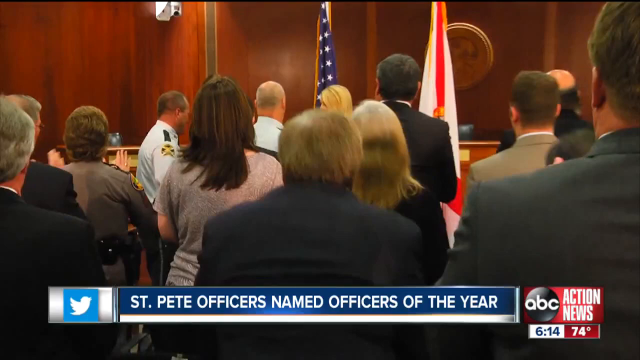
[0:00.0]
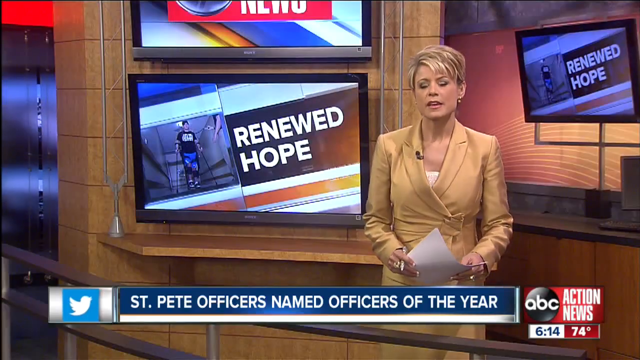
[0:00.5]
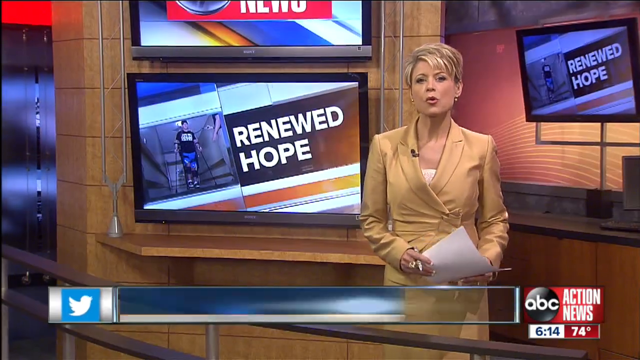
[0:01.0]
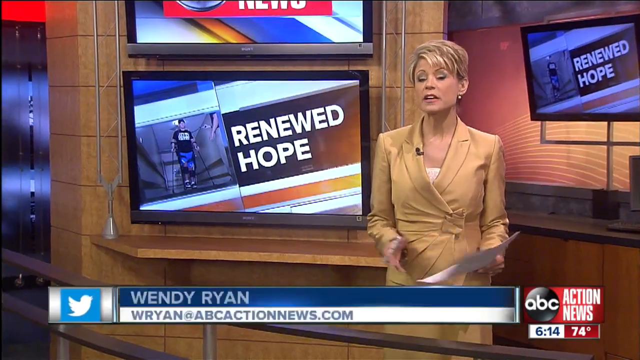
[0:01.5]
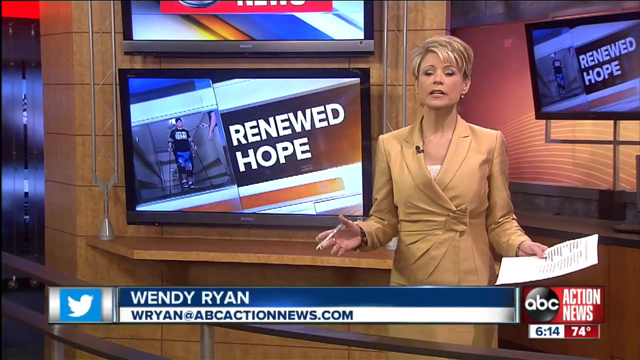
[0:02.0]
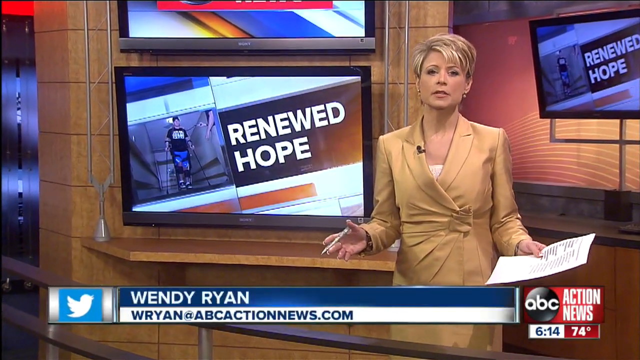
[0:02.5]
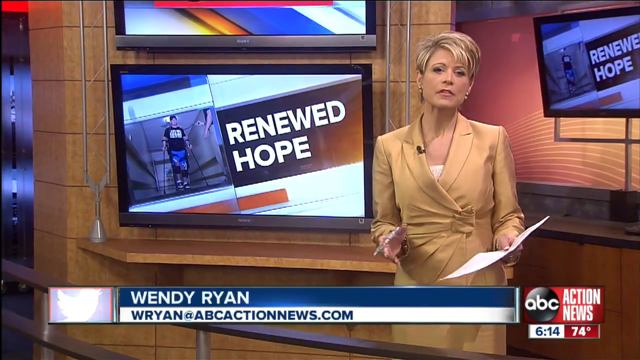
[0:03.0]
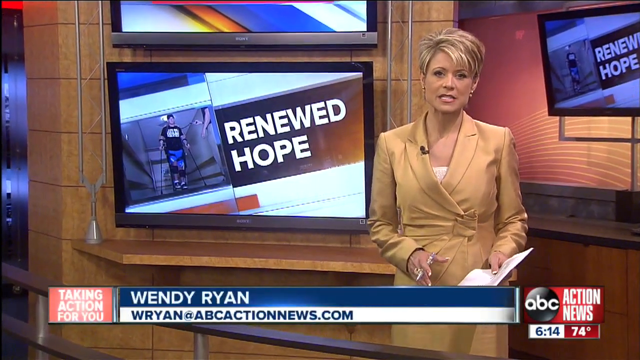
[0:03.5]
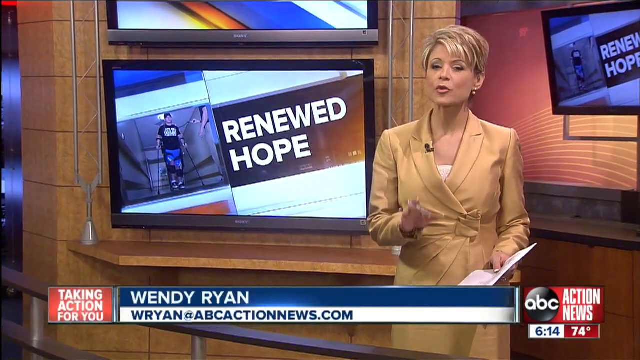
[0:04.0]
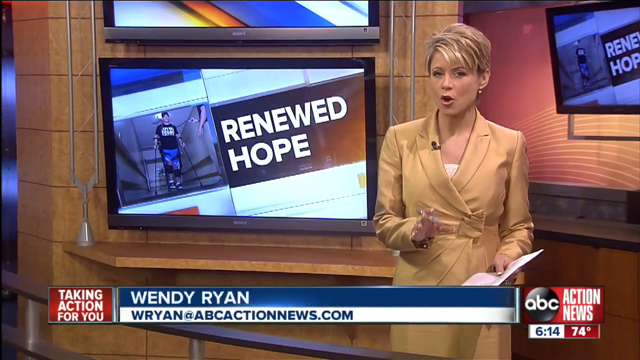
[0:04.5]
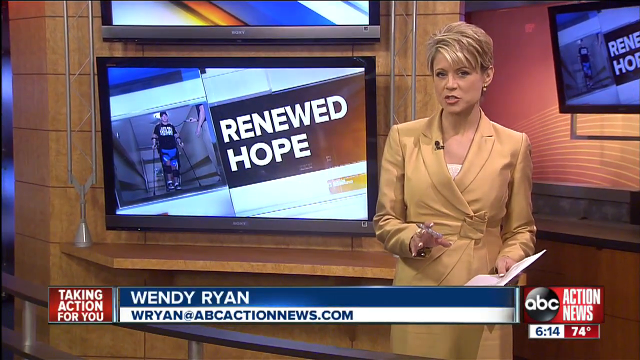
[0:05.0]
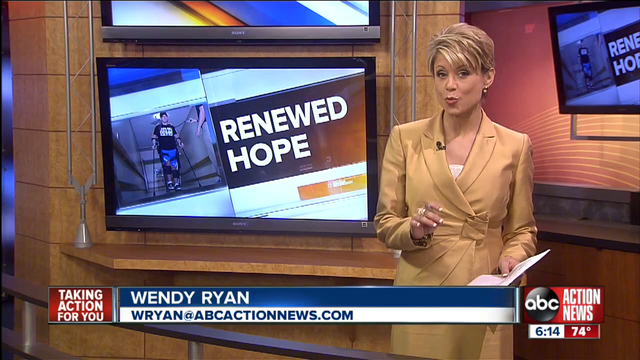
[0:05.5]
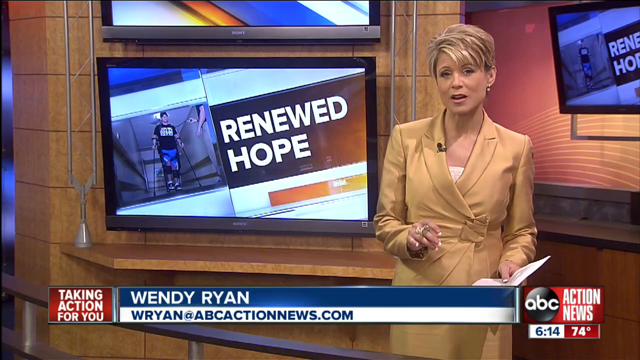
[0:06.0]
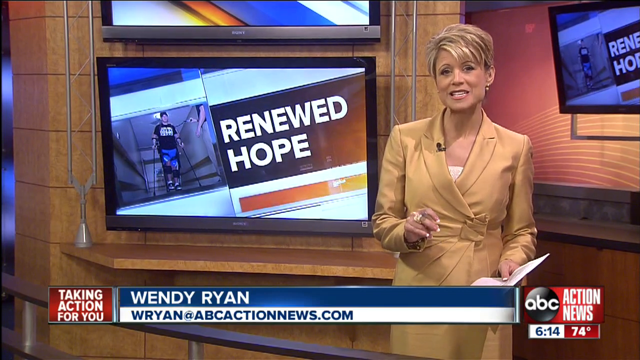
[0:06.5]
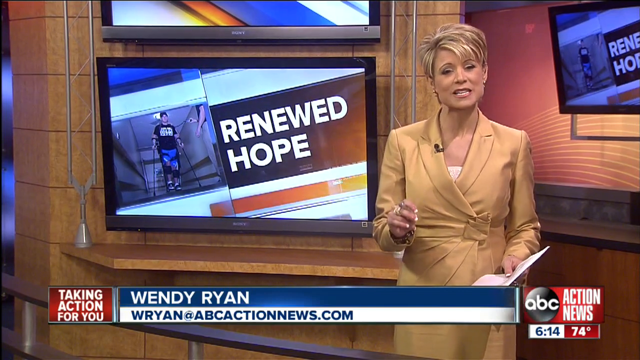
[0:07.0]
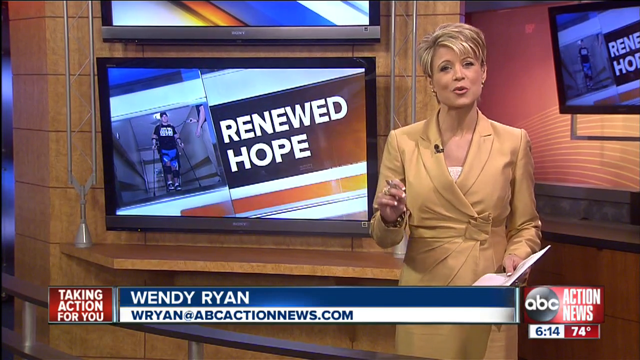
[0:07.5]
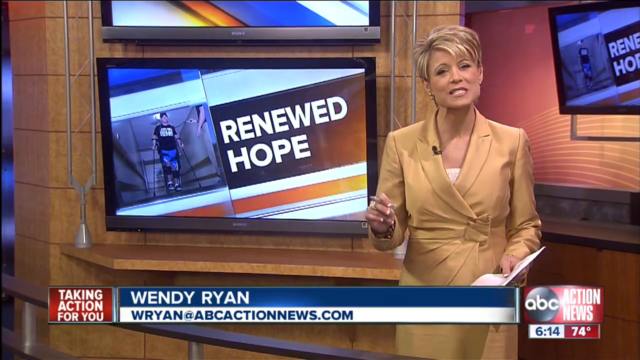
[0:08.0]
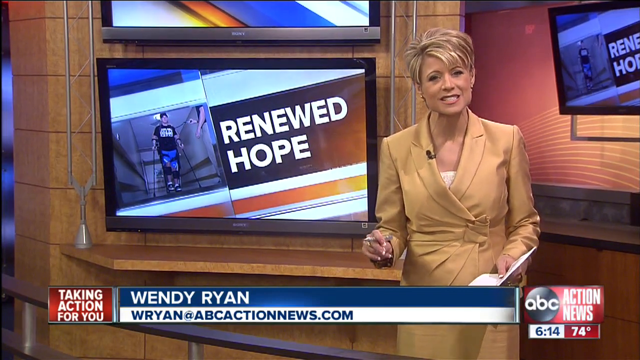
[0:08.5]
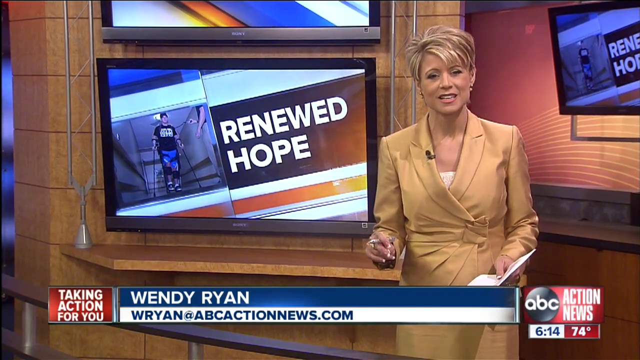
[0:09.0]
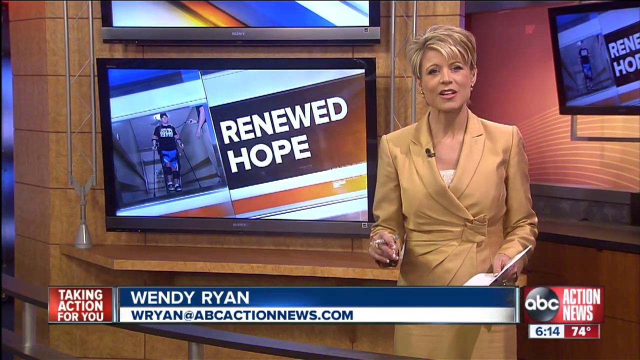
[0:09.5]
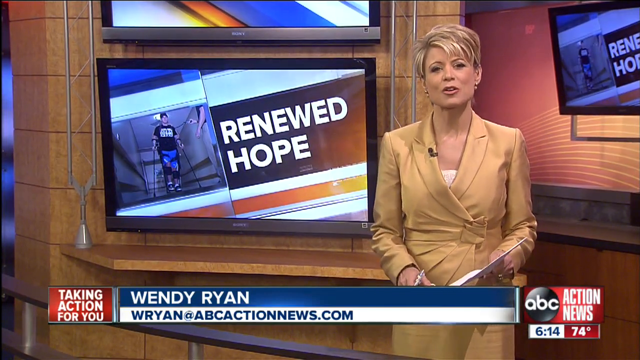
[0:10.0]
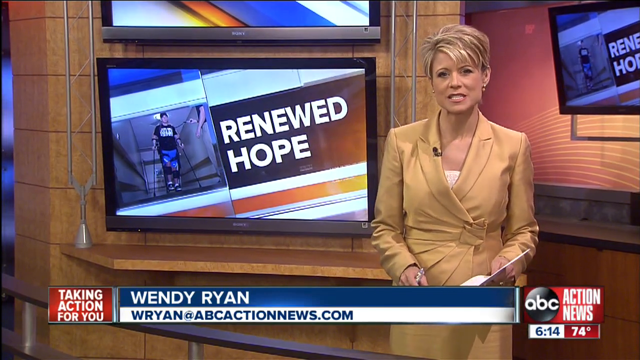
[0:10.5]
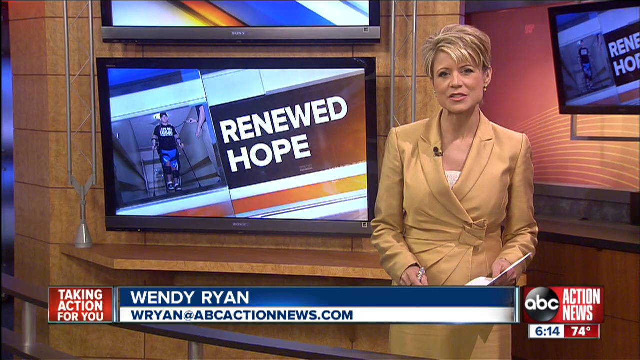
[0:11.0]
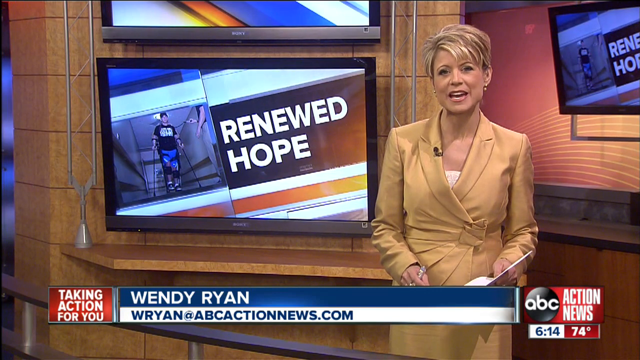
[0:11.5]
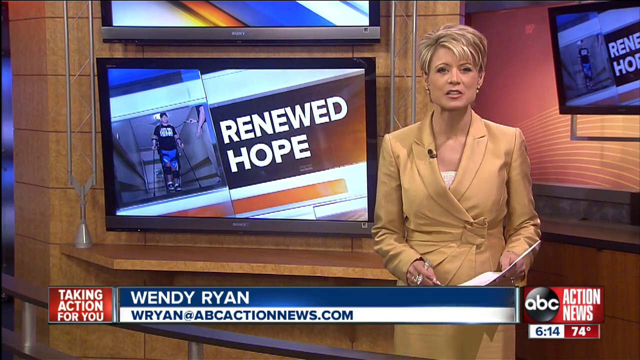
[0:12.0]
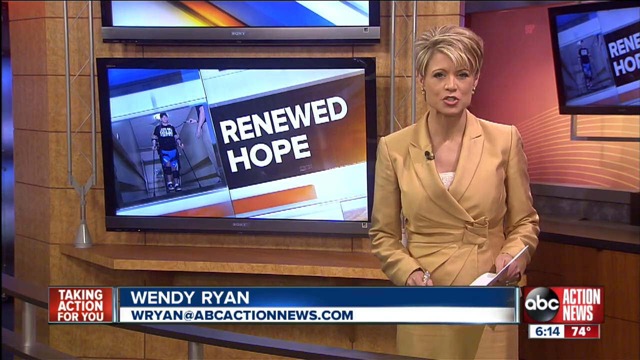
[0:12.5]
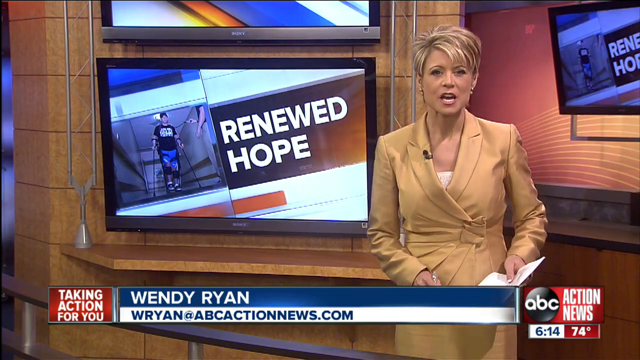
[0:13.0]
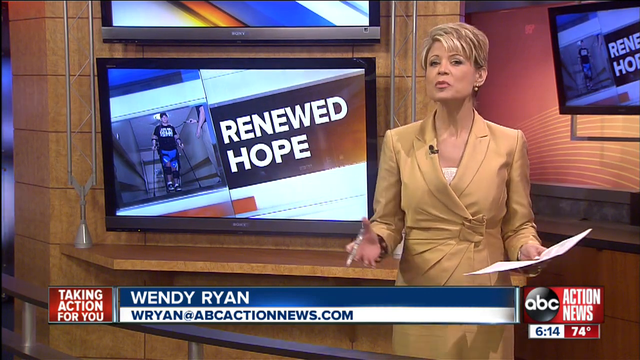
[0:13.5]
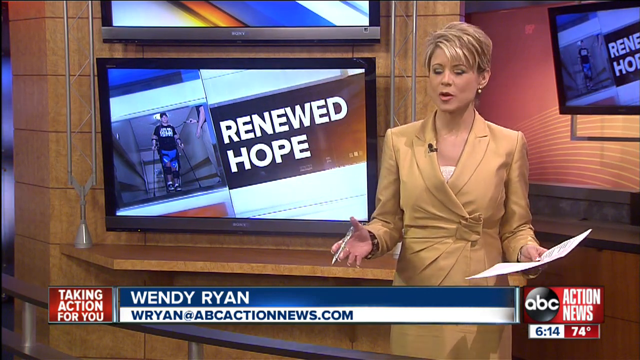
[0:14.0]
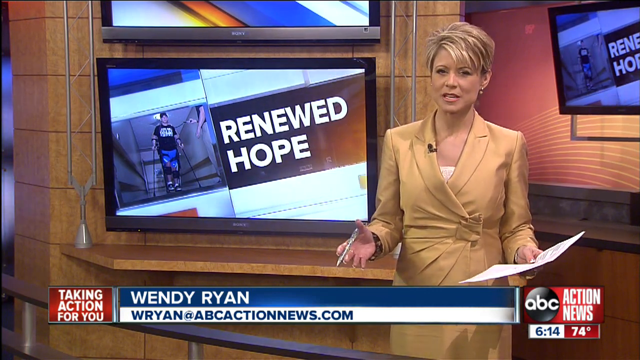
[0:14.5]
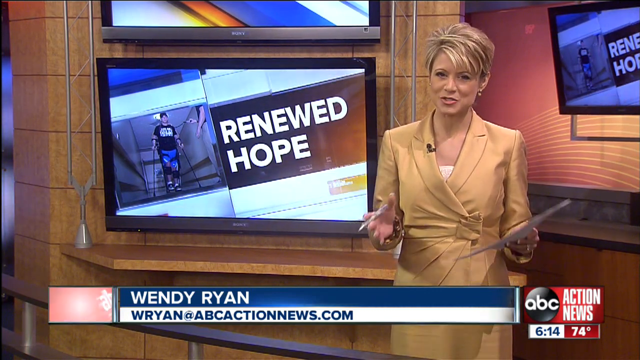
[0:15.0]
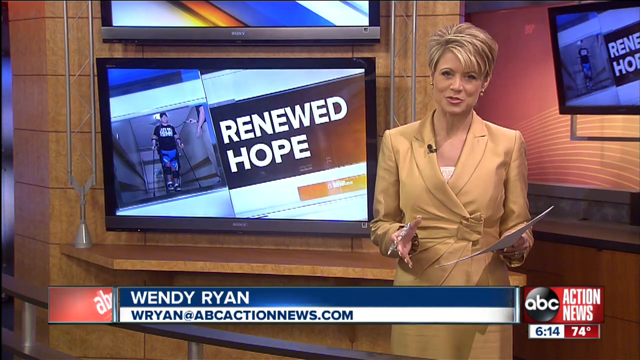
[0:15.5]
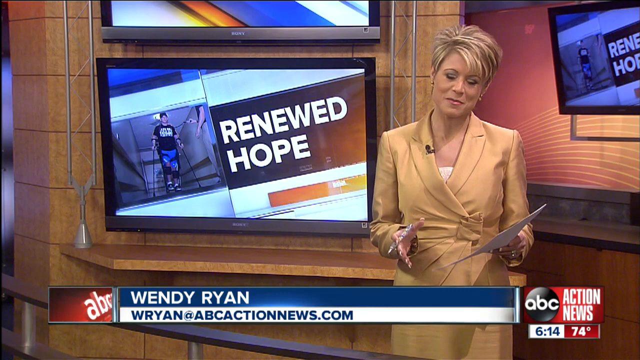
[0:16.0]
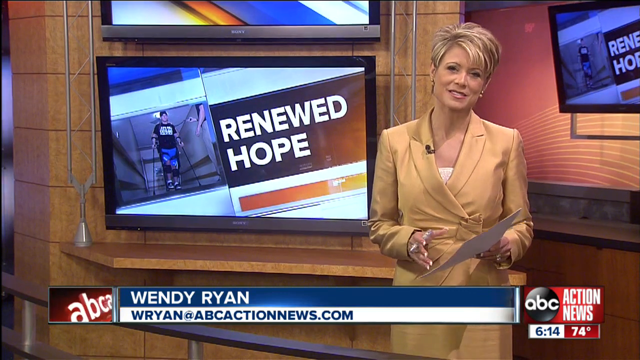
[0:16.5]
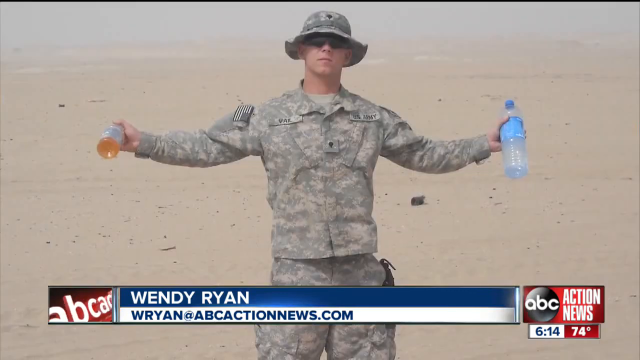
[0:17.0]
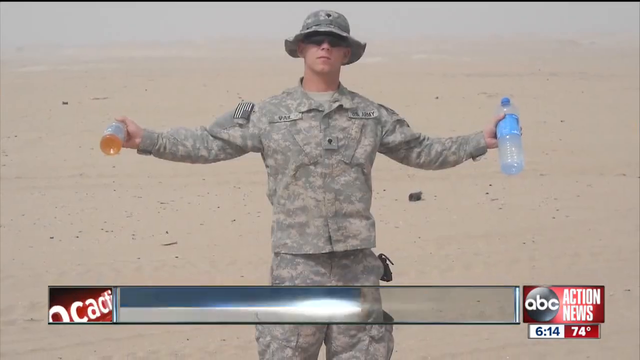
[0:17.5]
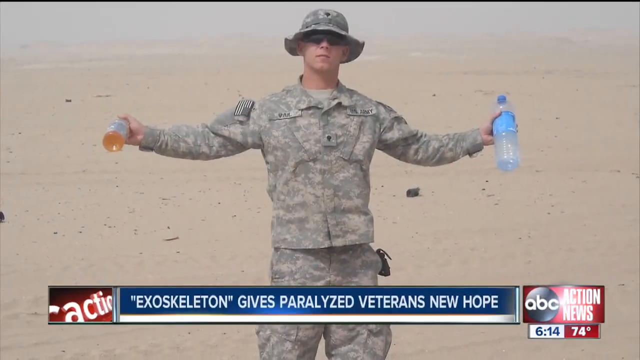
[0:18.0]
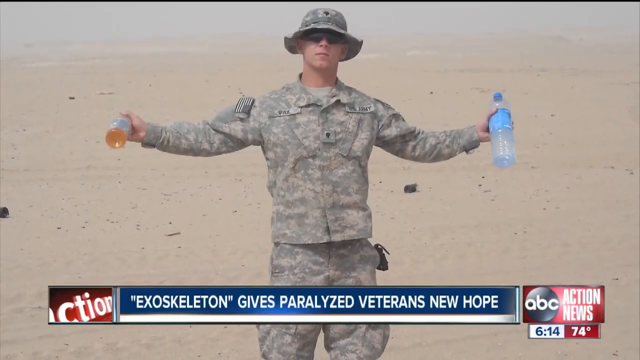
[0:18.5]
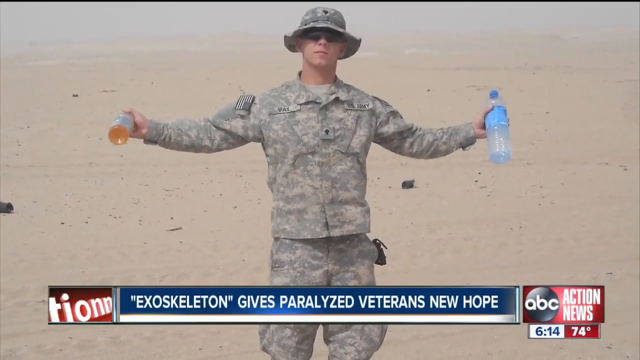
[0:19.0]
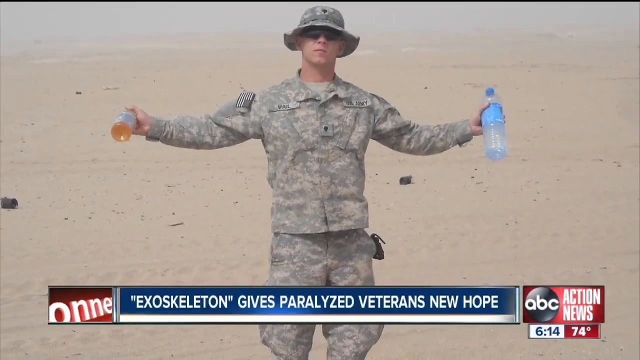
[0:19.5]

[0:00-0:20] In a studio newsroom, a woman anchor with short blonde hair stands wearing a gold-colored top that is sort of a wrap, wrapping from her right to her left. She holds a piece of paper in her left hand. She is Wendy Ryan, and this is ABC Action News. On the wall behind her are screens with captions and images, along with the text "renewed hope." She talks matter-of-factly, smiling, and uses her right hand, which holds a pen, to emphasize points. The video then cuts to an outdoor image of white sand and a soldier with his arms spread to his sides, a water bottle in his left hand and some kind of flavored drink in his right. He wears fatigues, sunglasses, and a wide-brimmed hat that is also fatigue-patterned. The broadcast is identified as ABC Action News with Wendy Ryan, taking action for you.